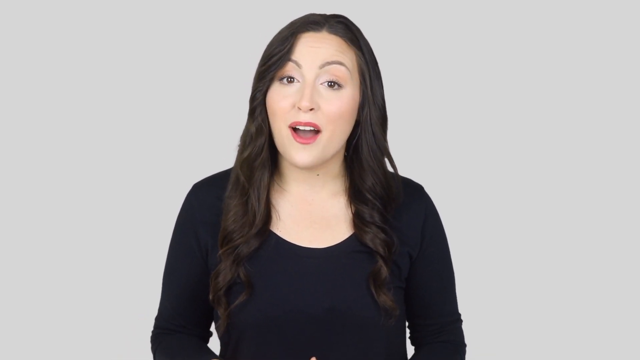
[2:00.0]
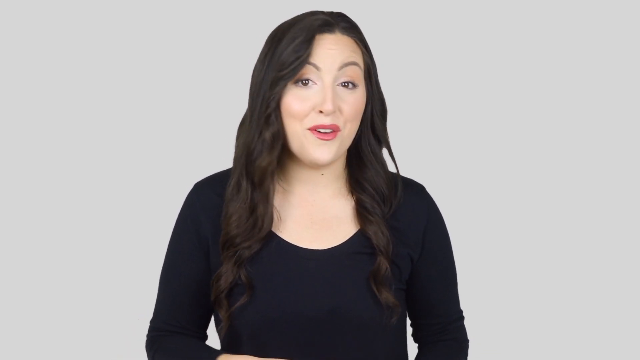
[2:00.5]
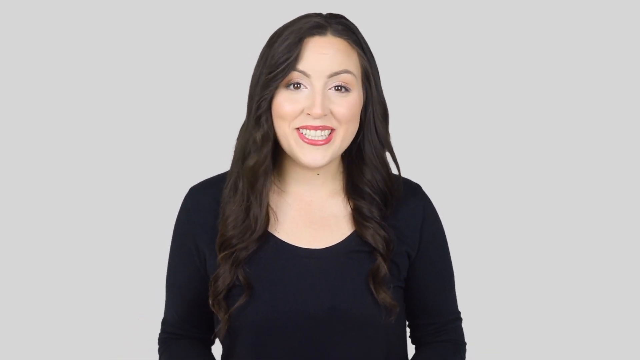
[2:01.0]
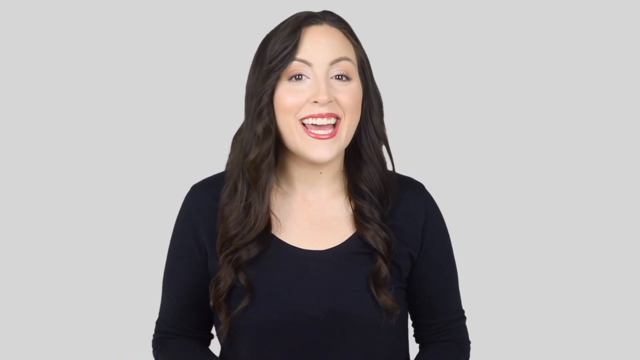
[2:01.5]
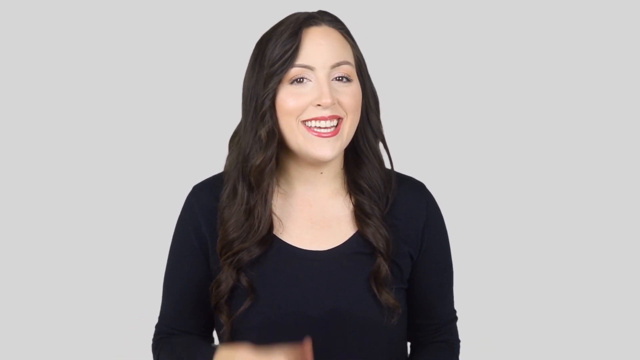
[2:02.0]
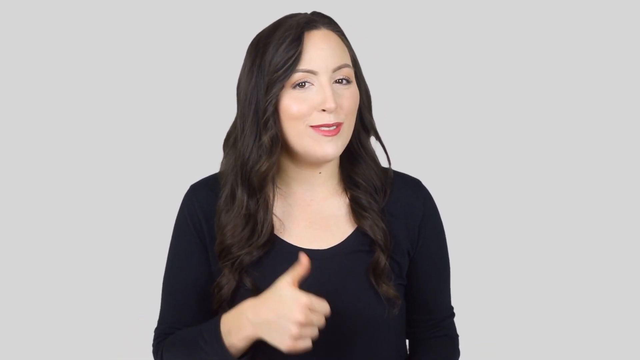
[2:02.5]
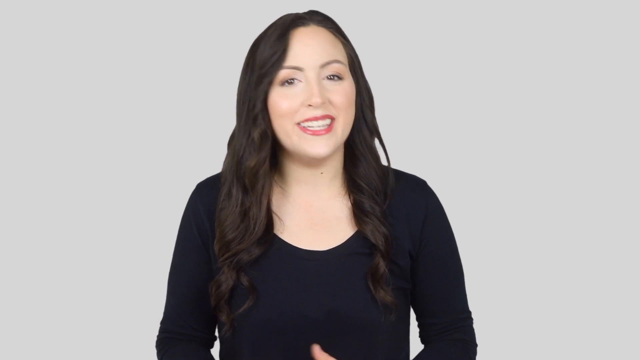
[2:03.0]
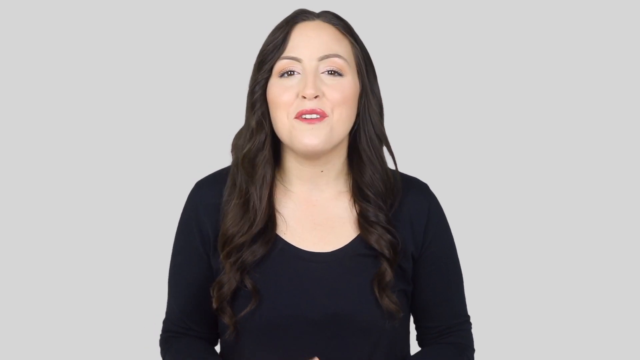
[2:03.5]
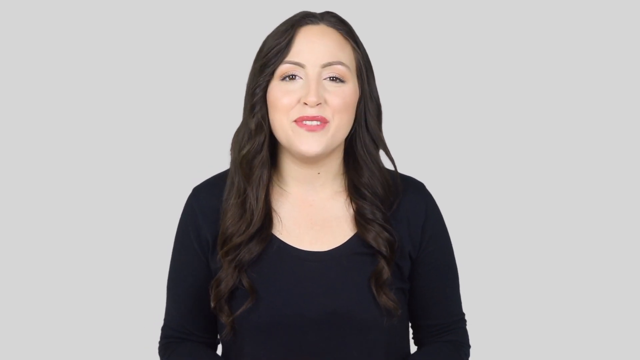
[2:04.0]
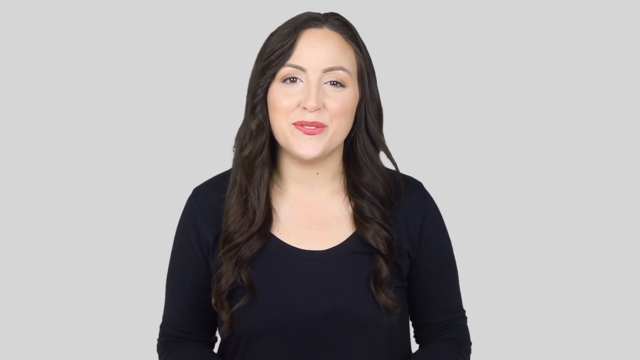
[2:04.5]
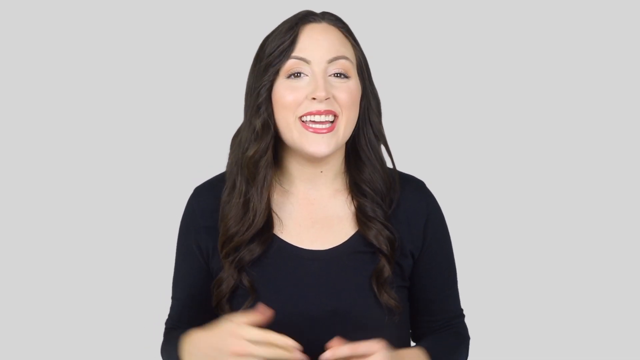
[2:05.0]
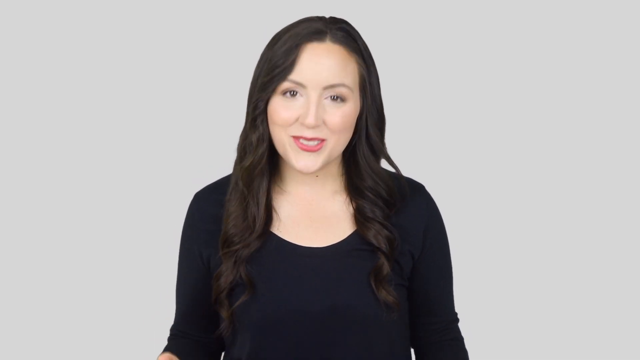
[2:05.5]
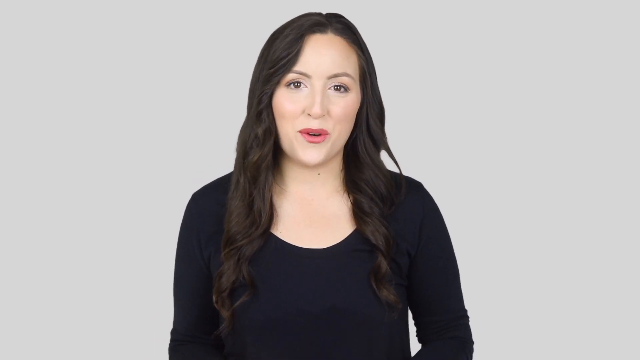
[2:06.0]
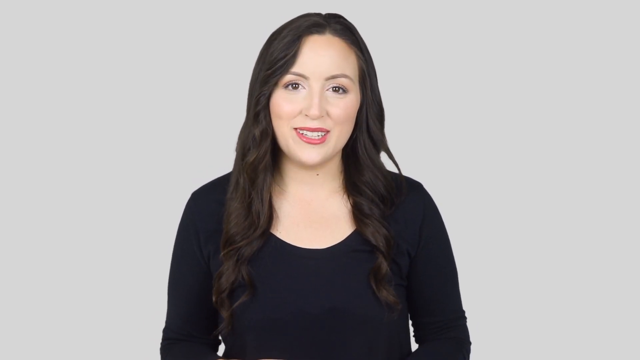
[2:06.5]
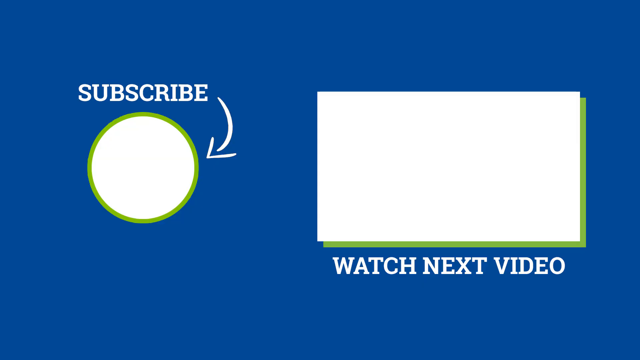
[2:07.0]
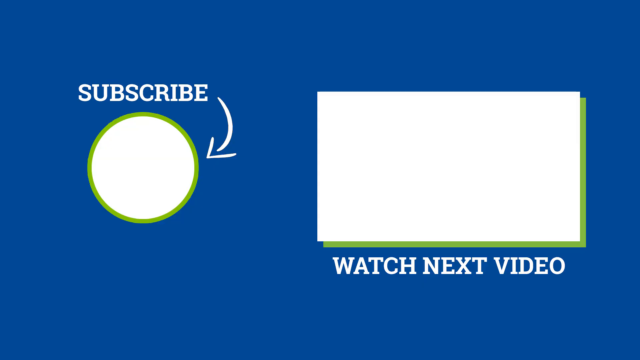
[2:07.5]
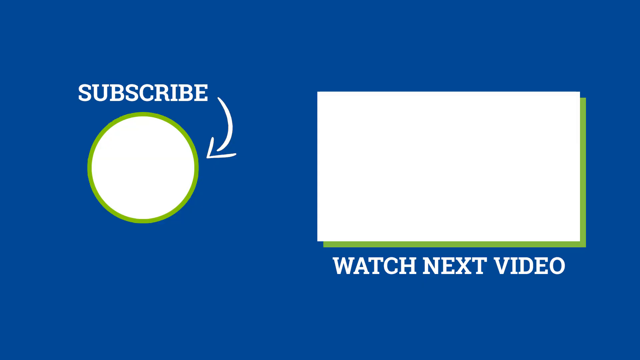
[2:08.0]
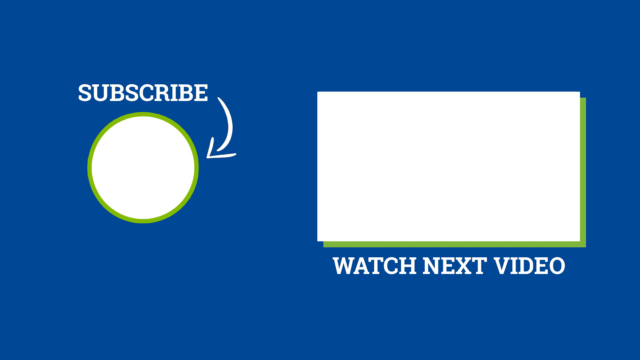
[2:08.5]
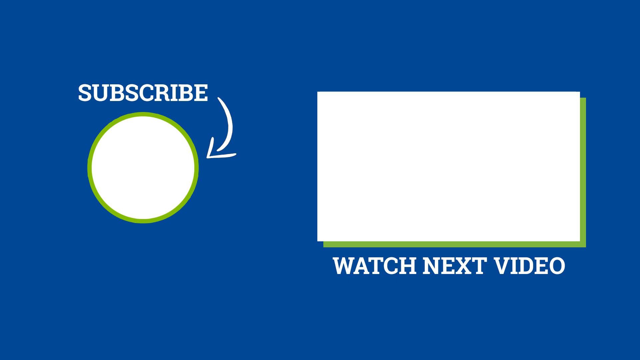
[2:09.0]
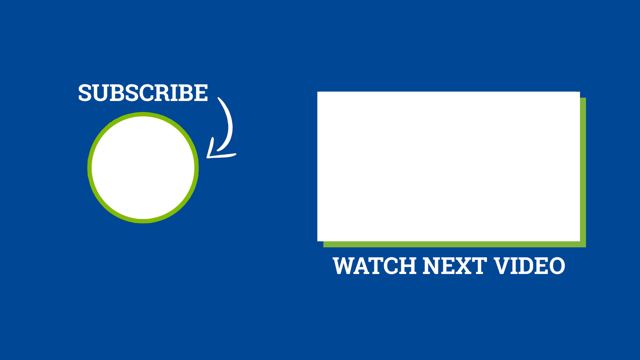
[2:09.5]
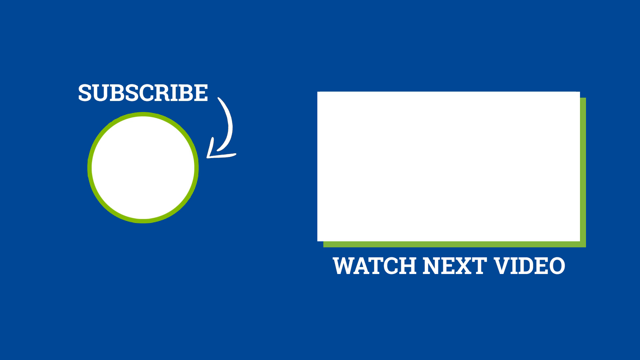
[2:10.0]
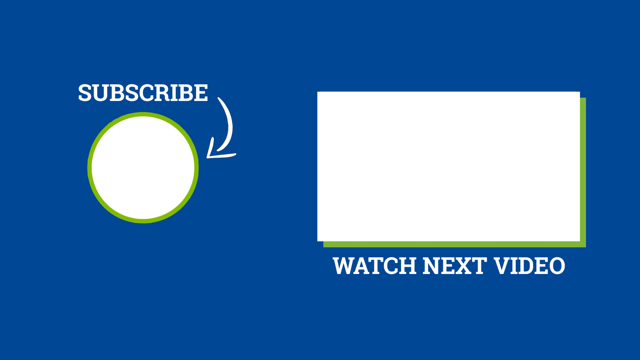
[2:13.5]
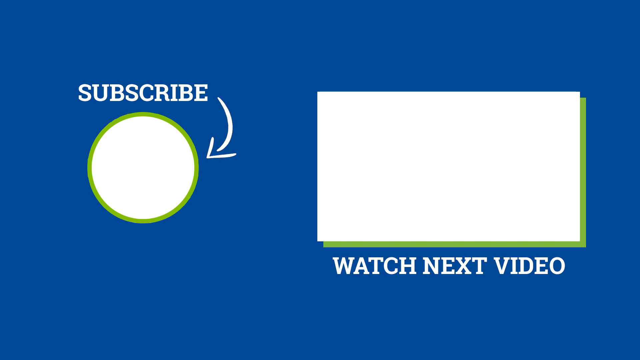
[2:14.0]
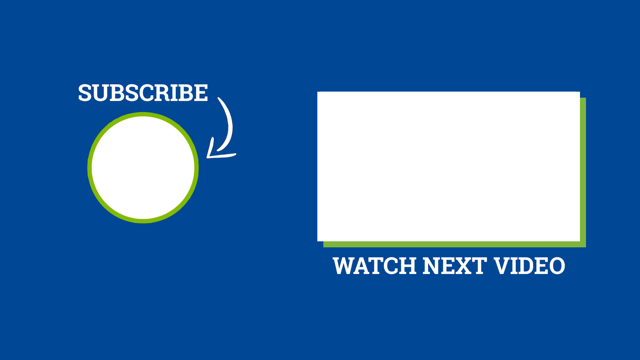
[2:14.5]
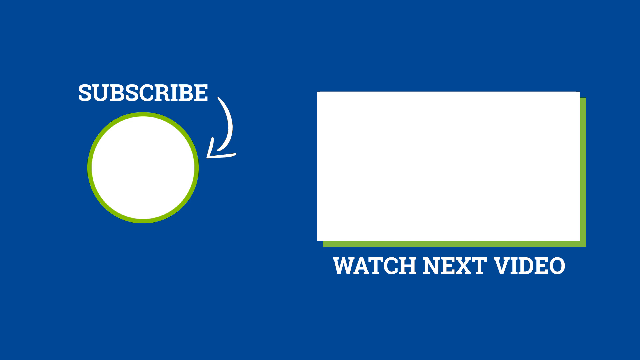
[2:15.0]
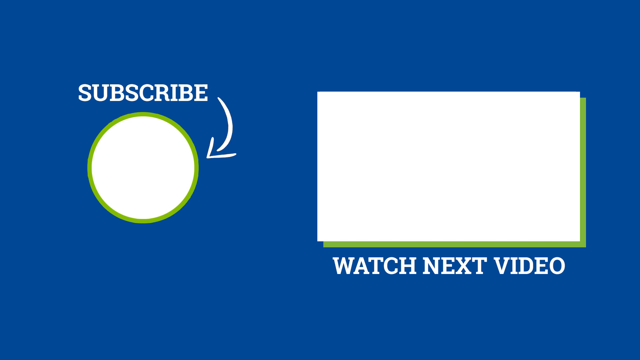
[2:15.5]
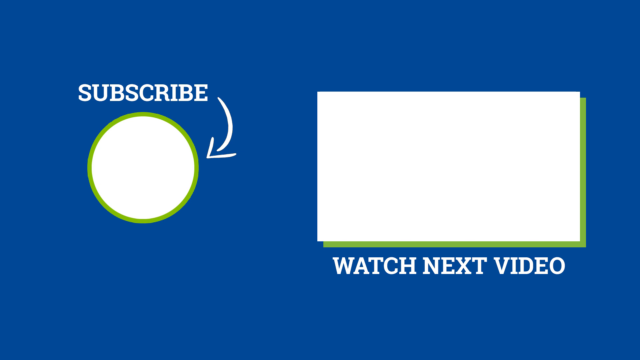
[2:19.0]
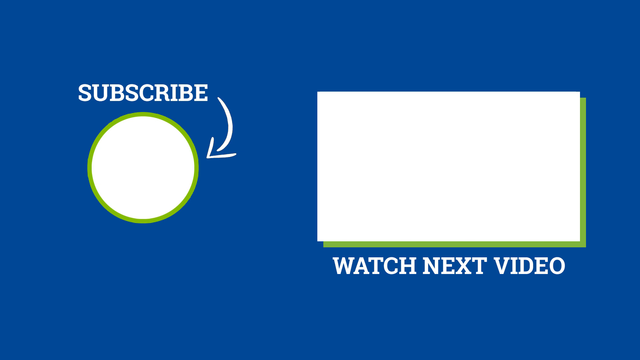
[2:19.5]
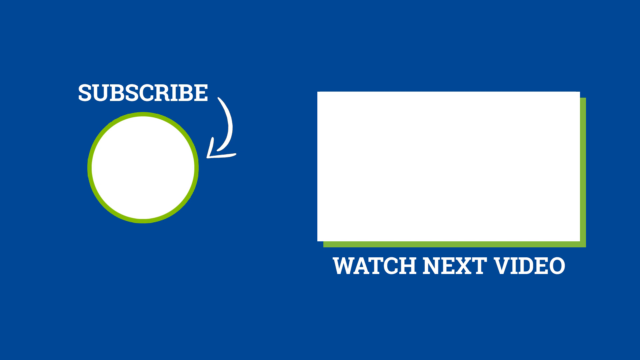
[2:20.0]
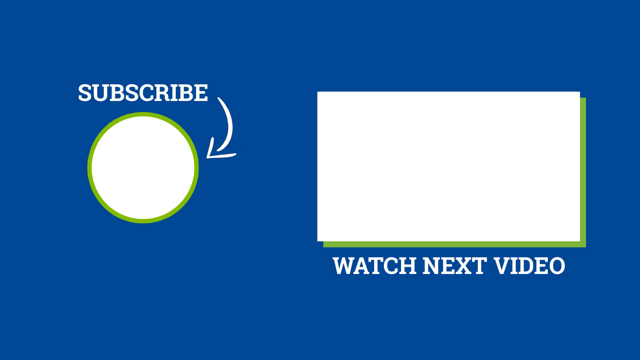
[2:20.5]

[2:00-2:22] A woman with long dark brown hair curled at the ends, wearing a long sleeve black shirt, stands in front of a light gray background, seen from the chest up. She speaks with a large smile showing her bright white teeth, gives a quick thumbs up, and continues speaking. The screen then changes to a blue background. On the left is a white circle with a green outline, with "subscribe" in white letters above it and a white arrow pointing down to the circle. To the right is a large white rectangle with what looks like a small green drop shadow to the bottom right, and underneath it large white text reads "watch next video". The white spaces are blank, seemingly where an image or video might be expected to play.